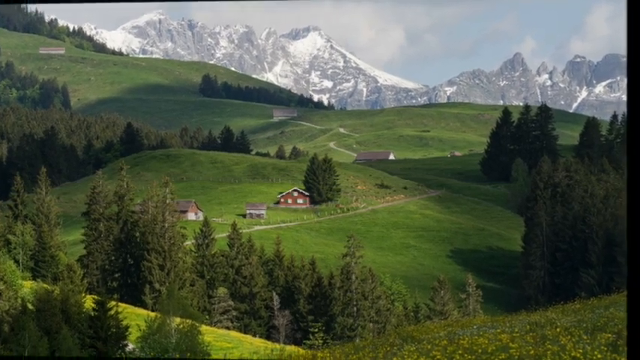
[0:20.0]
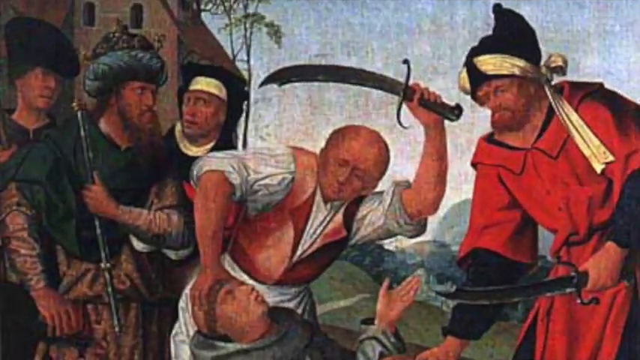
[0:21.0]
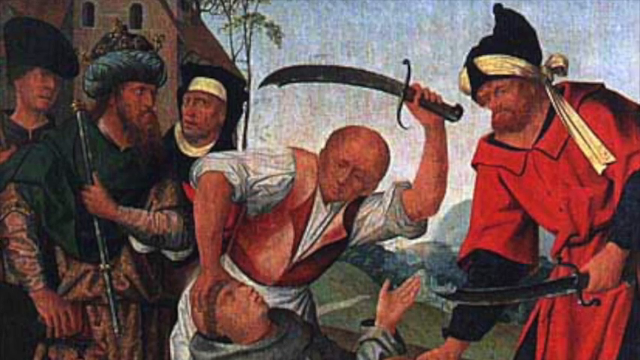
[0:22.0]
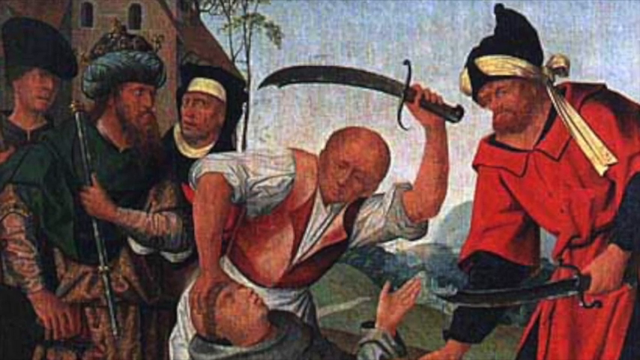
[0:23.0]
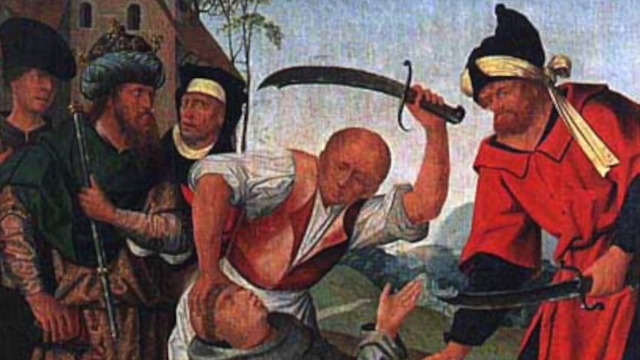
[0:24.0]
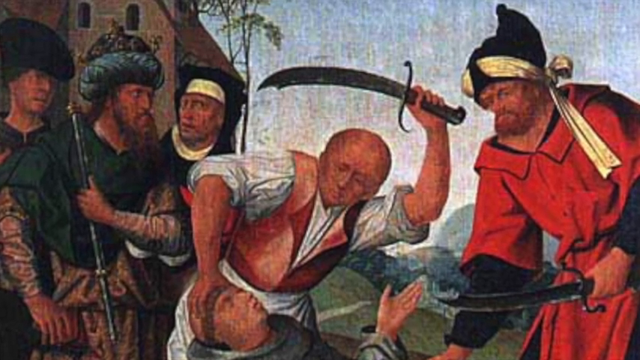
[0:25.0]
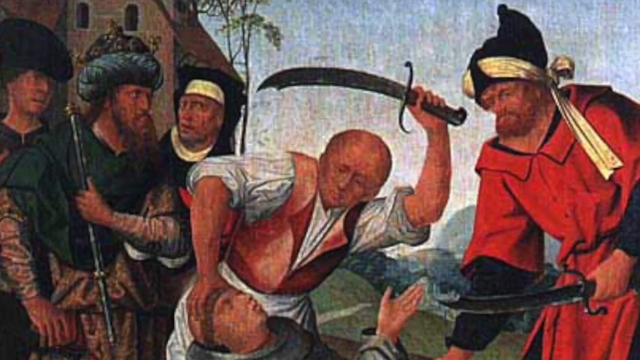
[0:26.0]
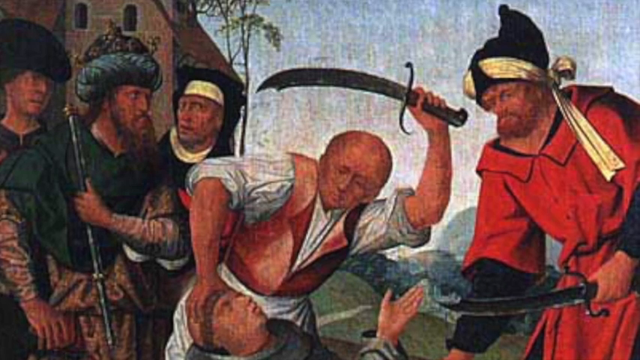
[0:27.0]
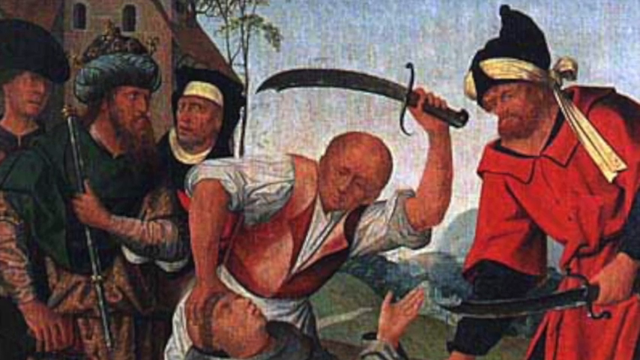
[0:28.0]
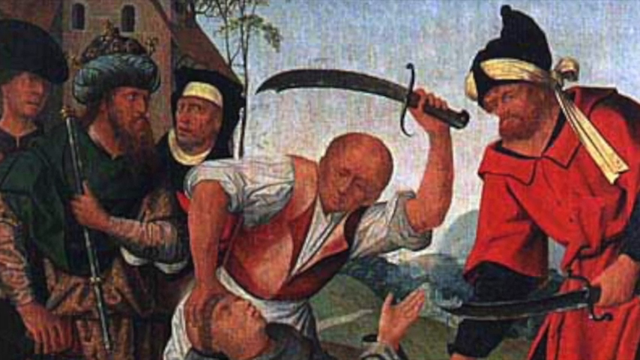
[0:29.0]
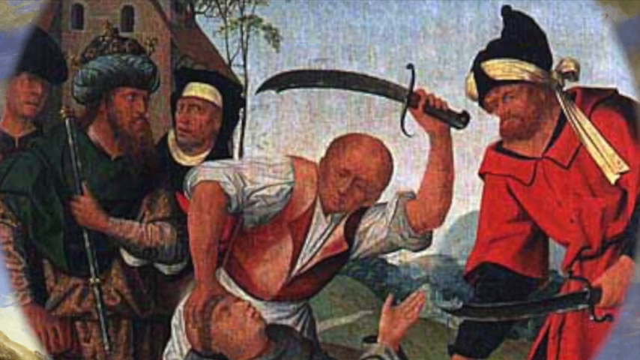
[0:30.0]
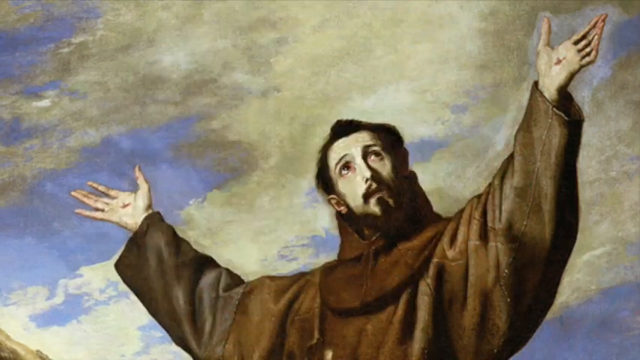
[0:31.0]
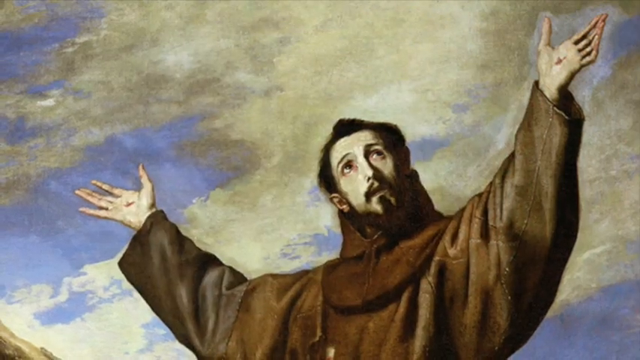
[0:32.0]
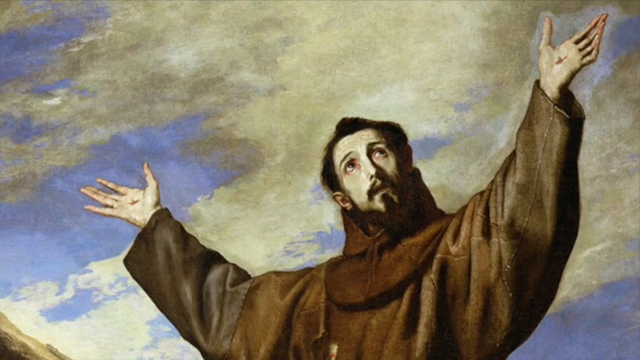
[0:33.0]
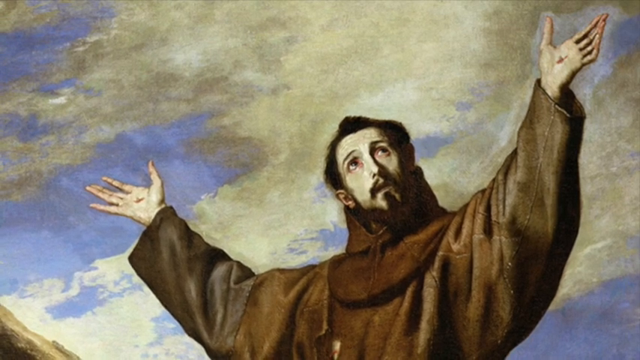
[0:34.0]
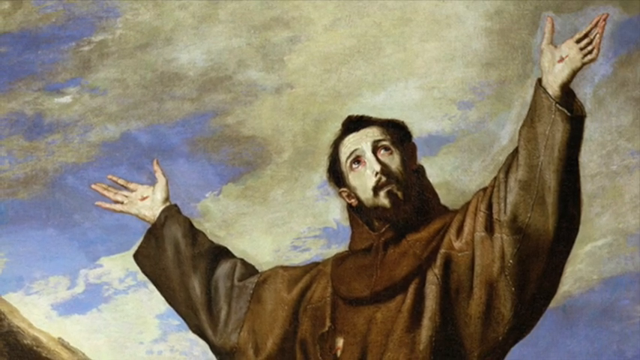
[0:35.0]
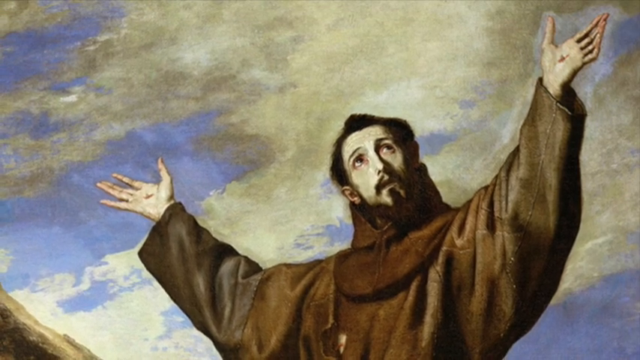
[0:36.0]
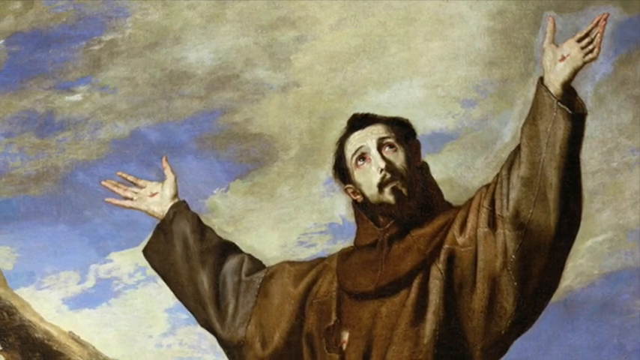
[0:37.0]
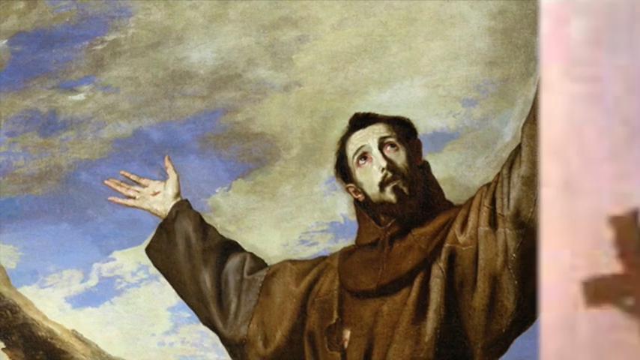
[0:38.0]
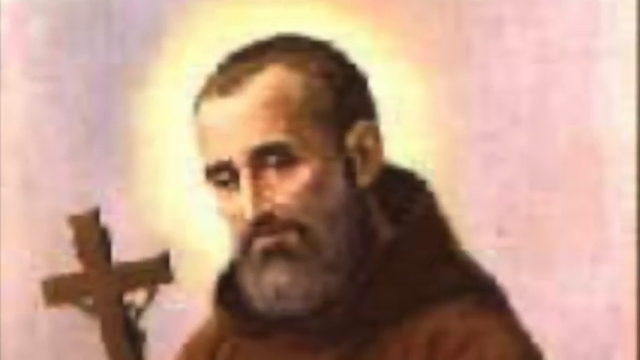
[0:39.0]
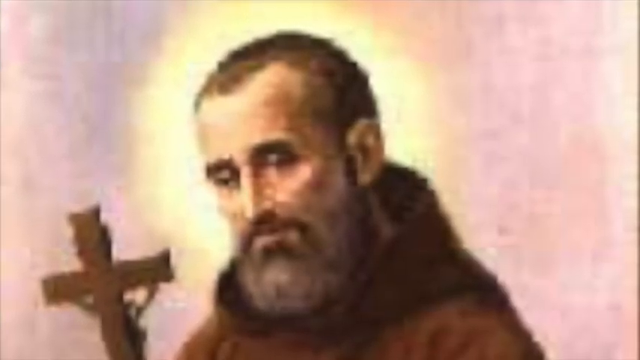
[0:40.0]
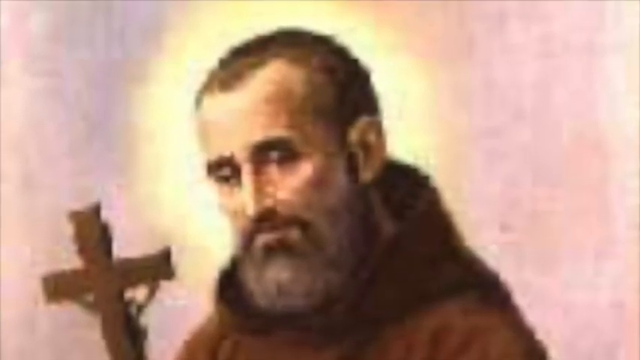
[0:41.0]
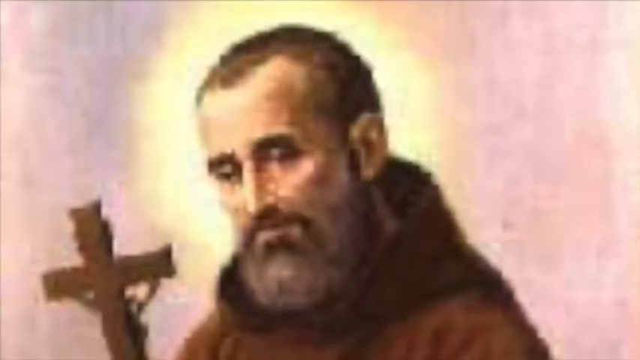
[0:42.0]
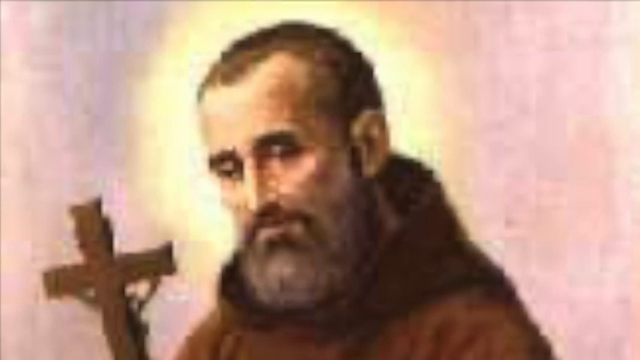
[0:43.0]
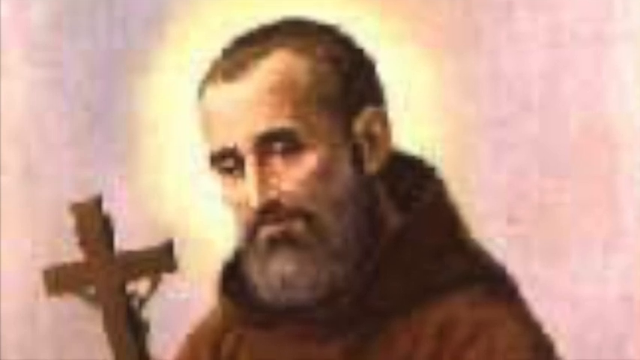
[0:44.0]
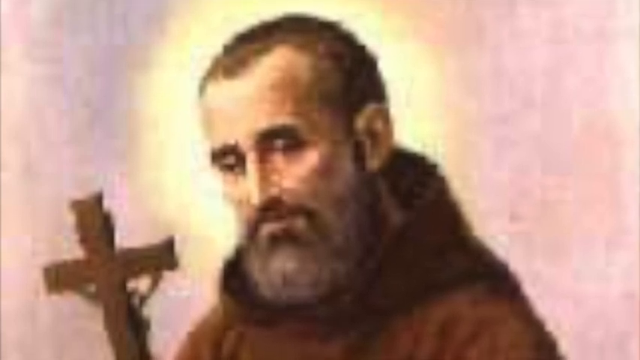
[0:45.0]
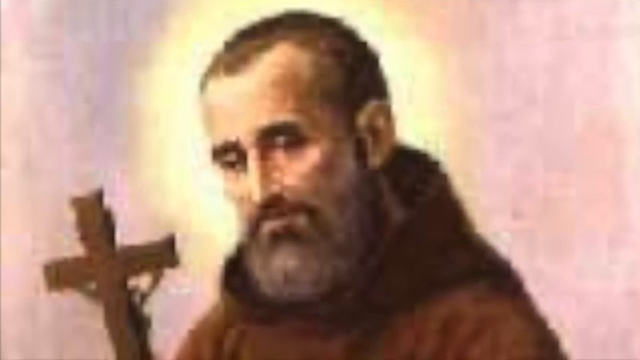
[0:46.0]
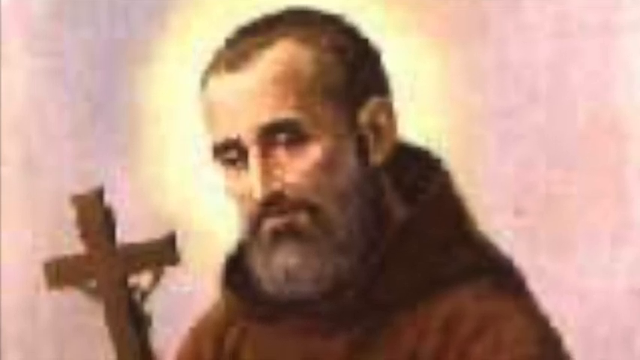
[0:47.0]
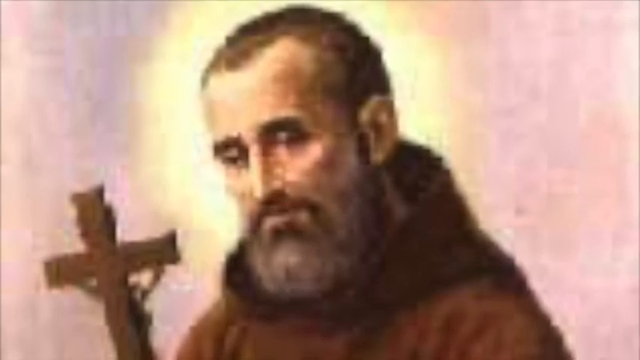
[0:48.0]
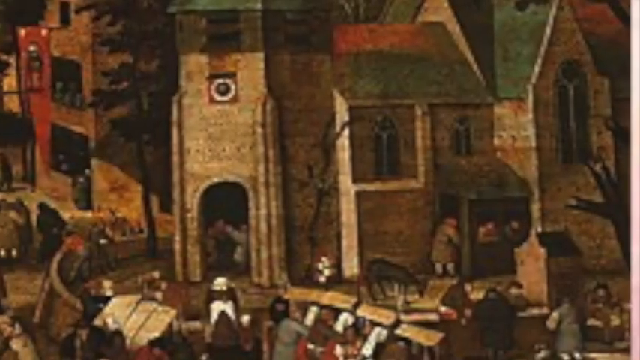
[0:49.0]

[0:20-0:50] A landscape of rolling hills appears, with snow-capped mountains in the background and trees in the foreground and on the hills. Small to medium-sized country houses are dotted around the landscape: three in the center and one just to the right. A small, thin, winding road goes across the hills in front of the houses, and there is a house or barn at the back and one in the top left. The photo zooms out and transitions into a painting of six people. In the center is a man in white clothing and a red waistcoat, holding a large sword in his left hand and holding the forehead of a person below him with his right hand; that person has his left palm out facing the viewer. On the right is a male in a red robe who also holds a sword in his left hand, black and silvery on the edges, and wears a black hat with a white head tie around his forehead. On the left are three people wearing green, with hats or head robes. There is a building in the background on the left, and some sky and a bit of hill on the right. The painting transitions into another painting of a male in a long black or greyish robe, both hands outstretched at about head height, who appears to have red marks in the center of each palm. He looks toward the top right of the scene, with lots of clouds and a bit of blue sky behind him, and is shown from the chest up. He has a beard, dark hair, and a hood around his neck. This transitions to a fairly blurry picture of another religious figure, a bearded male with a cross on his right-hand side and a halo-like effect of a yellow sun behind him.